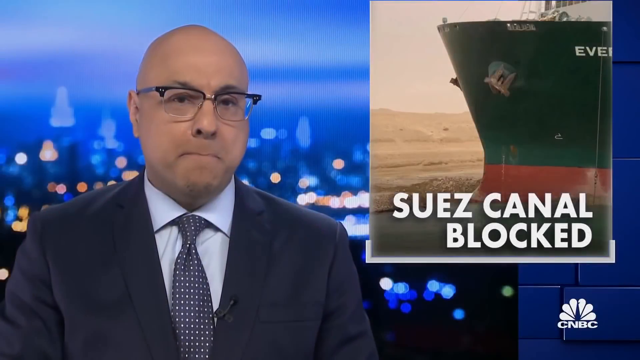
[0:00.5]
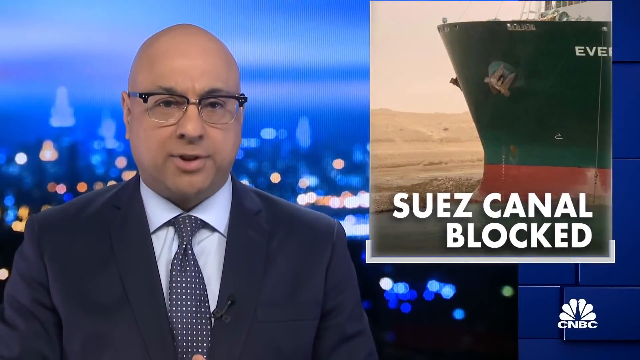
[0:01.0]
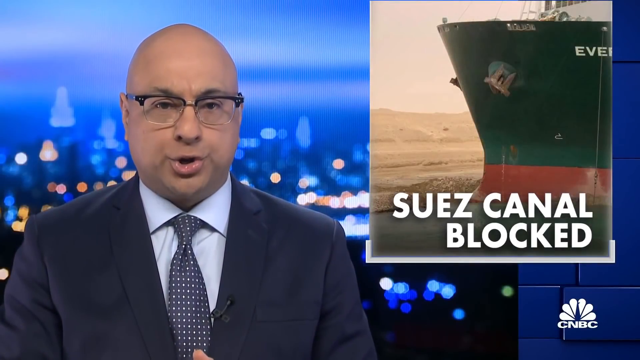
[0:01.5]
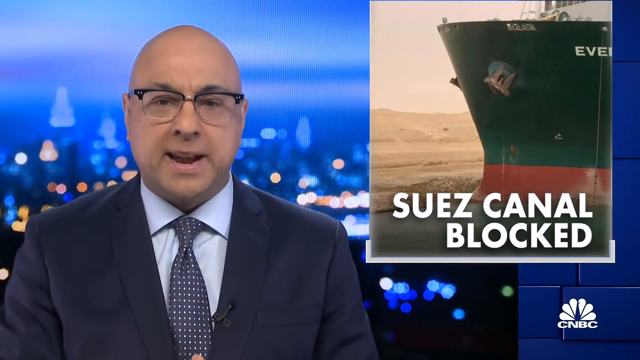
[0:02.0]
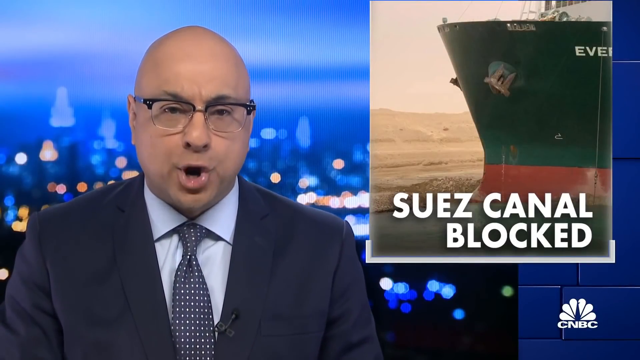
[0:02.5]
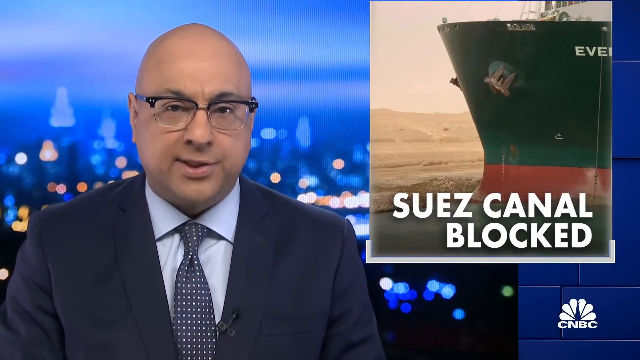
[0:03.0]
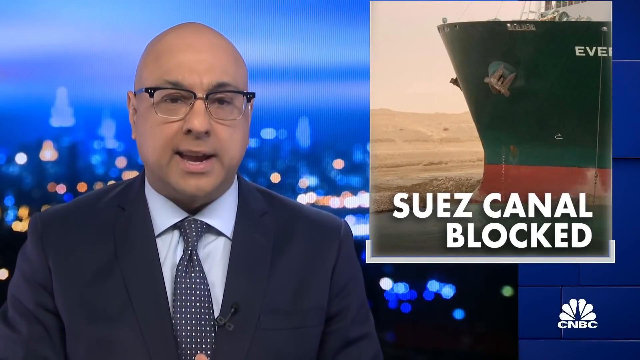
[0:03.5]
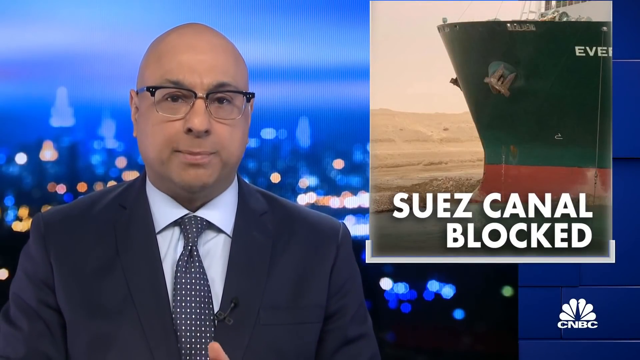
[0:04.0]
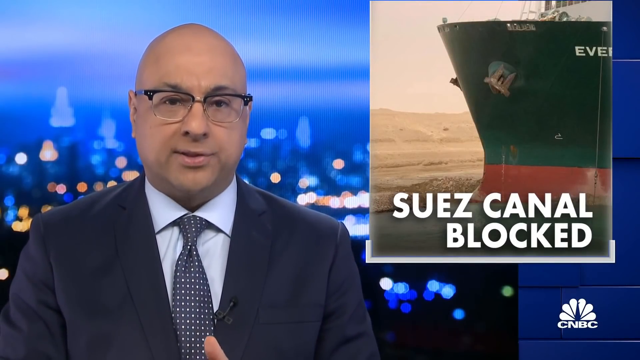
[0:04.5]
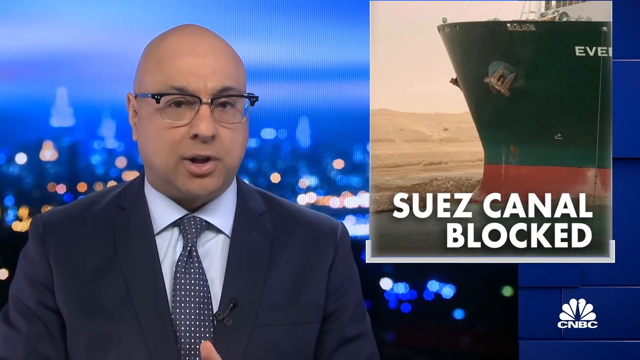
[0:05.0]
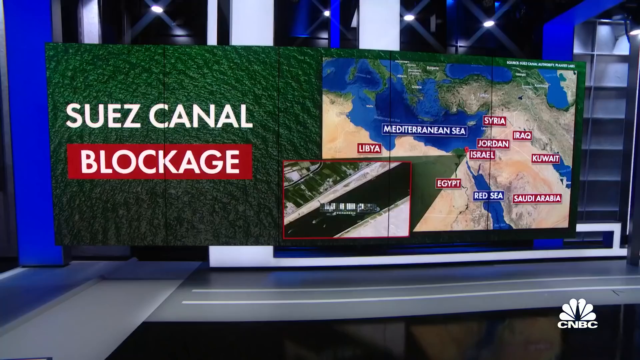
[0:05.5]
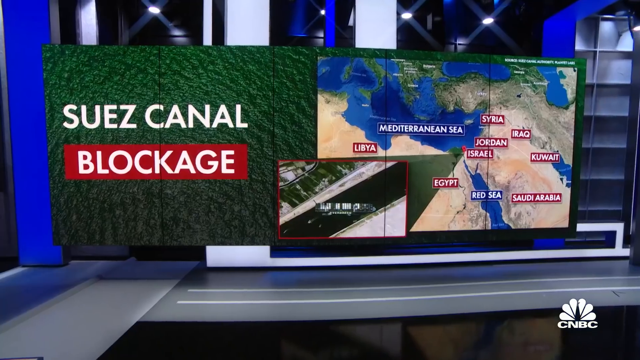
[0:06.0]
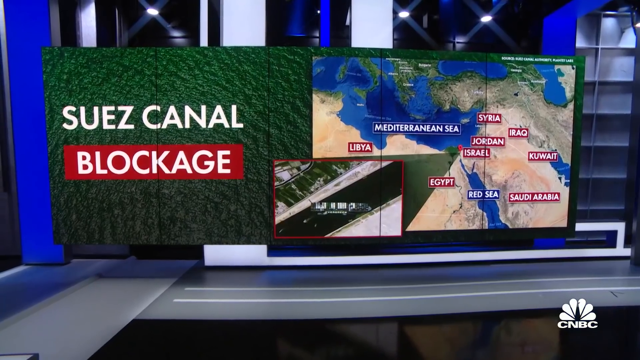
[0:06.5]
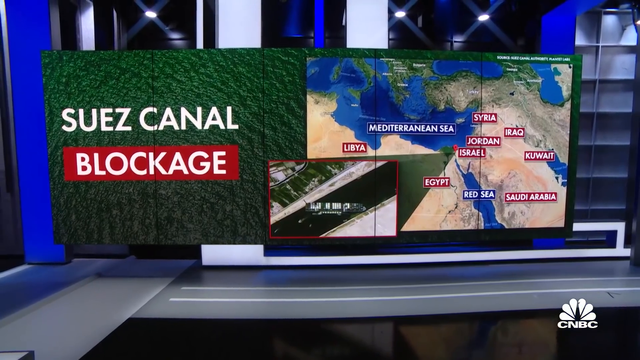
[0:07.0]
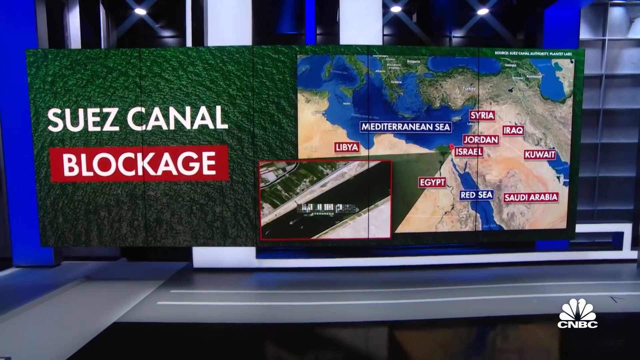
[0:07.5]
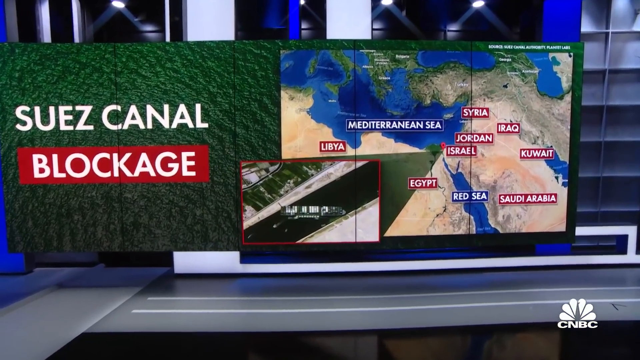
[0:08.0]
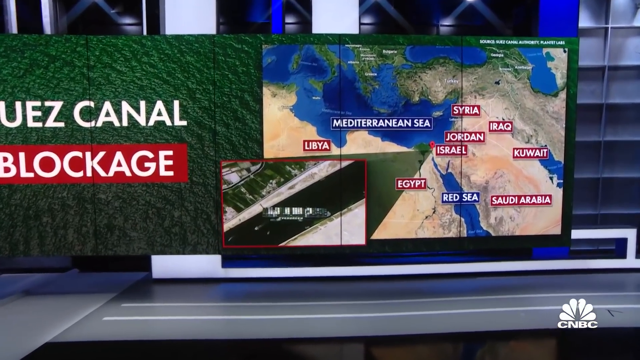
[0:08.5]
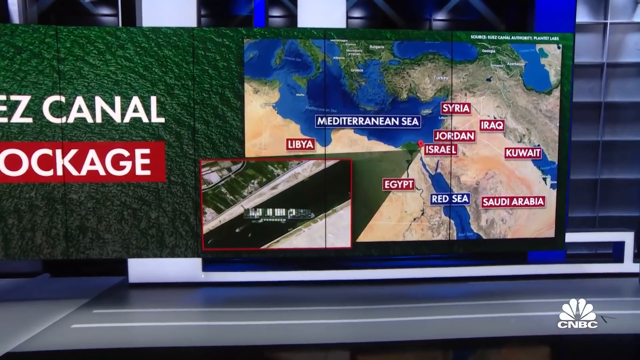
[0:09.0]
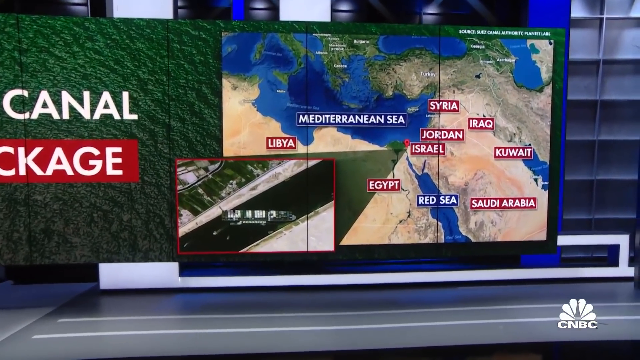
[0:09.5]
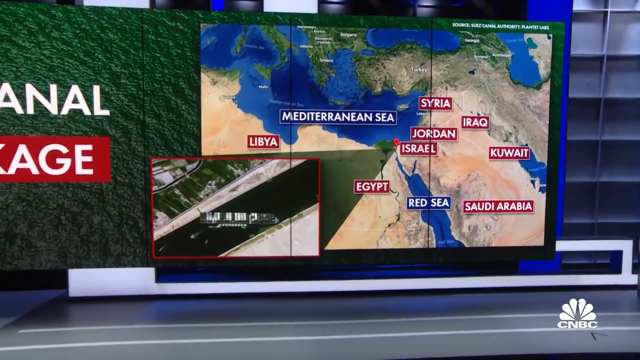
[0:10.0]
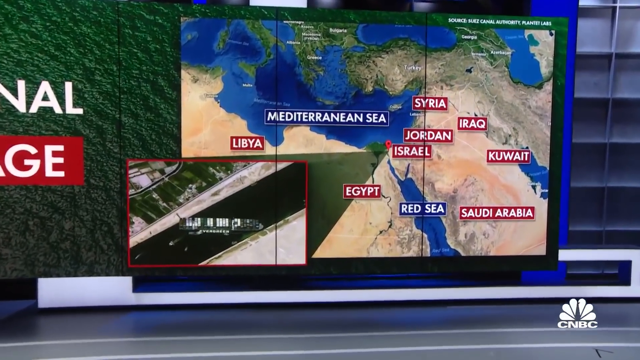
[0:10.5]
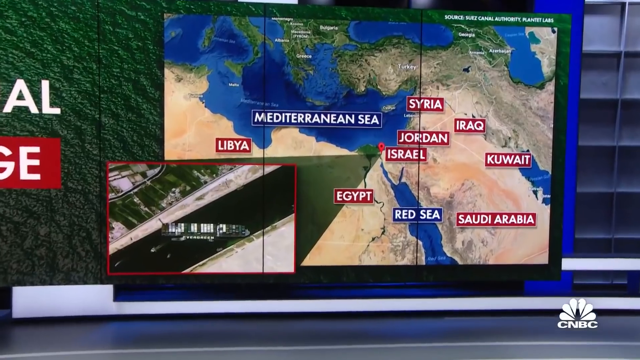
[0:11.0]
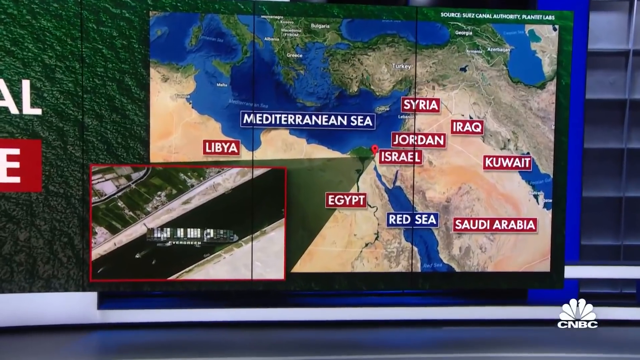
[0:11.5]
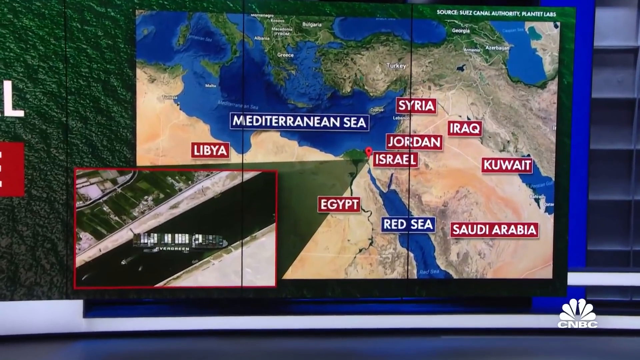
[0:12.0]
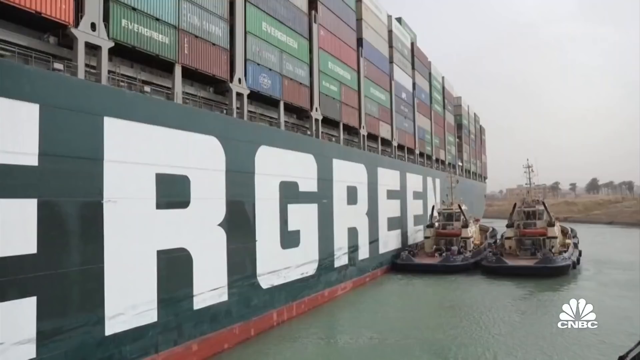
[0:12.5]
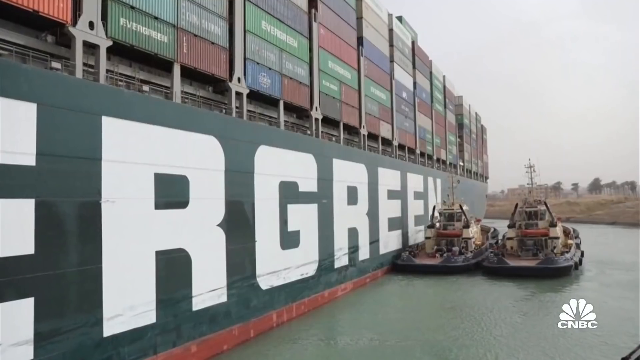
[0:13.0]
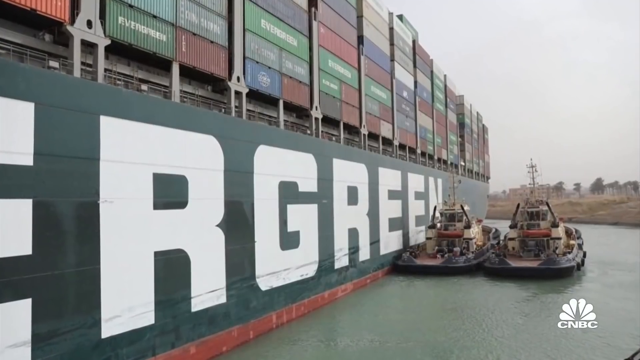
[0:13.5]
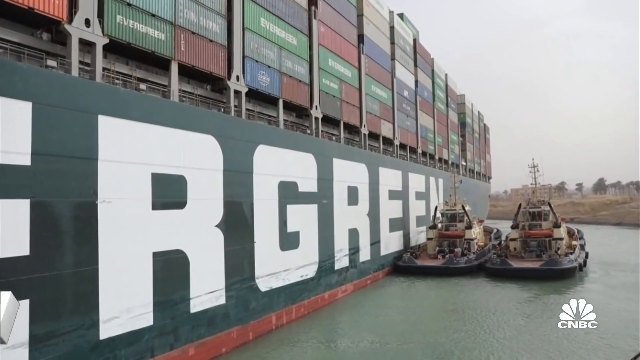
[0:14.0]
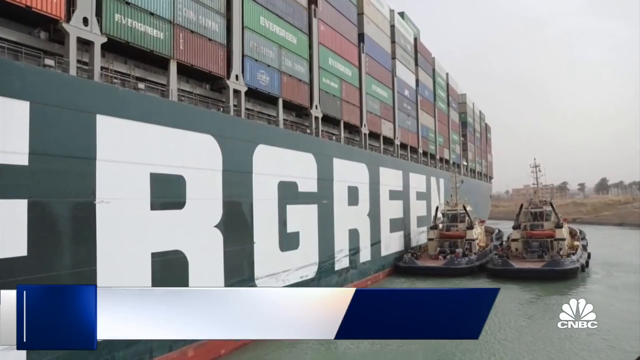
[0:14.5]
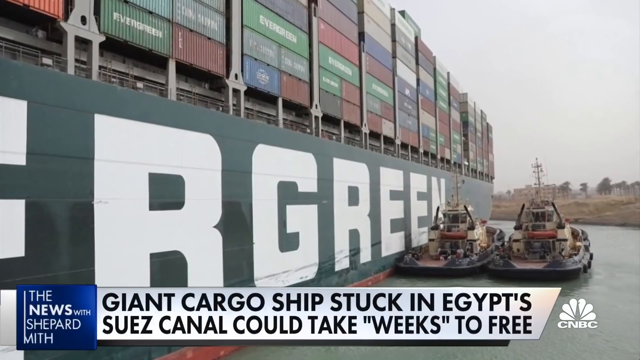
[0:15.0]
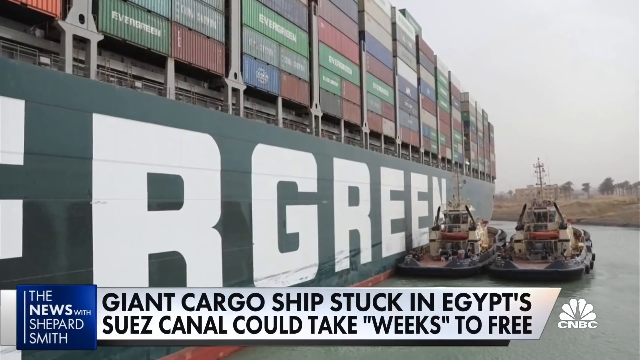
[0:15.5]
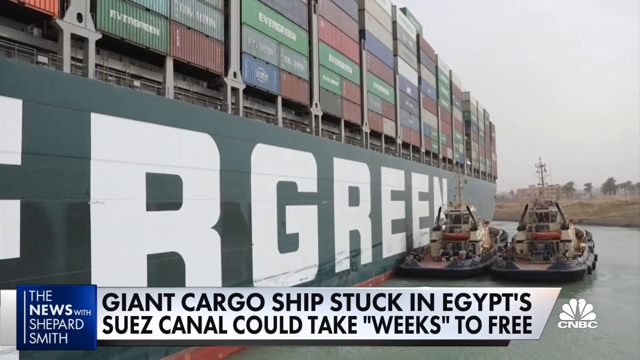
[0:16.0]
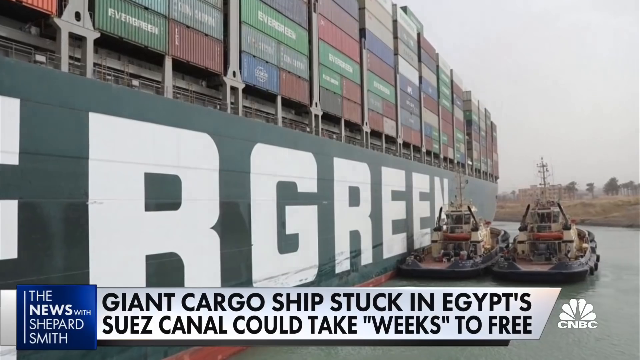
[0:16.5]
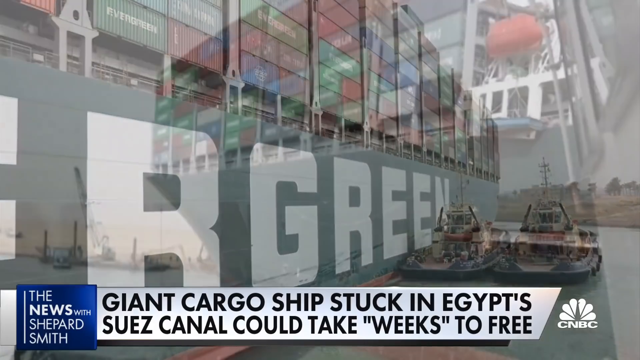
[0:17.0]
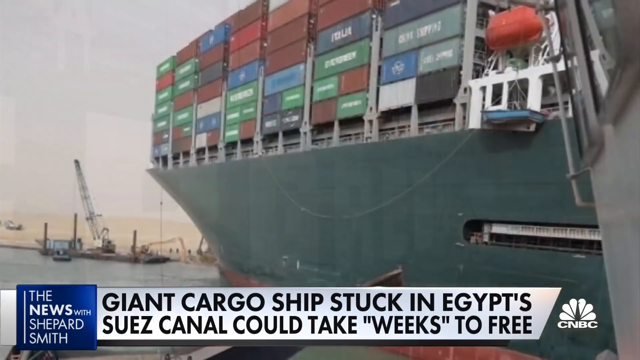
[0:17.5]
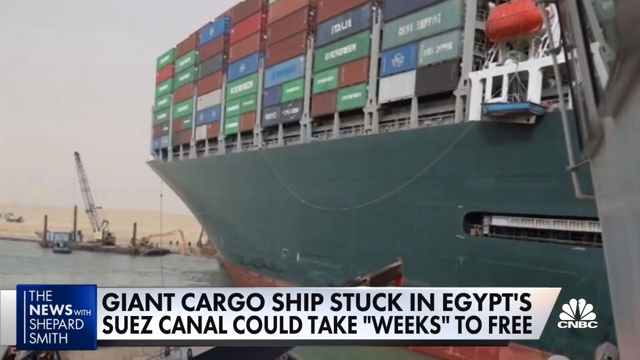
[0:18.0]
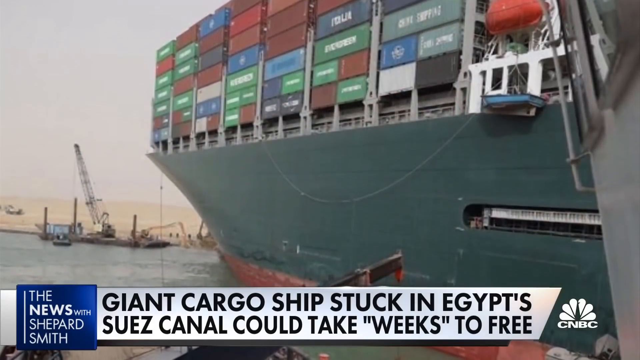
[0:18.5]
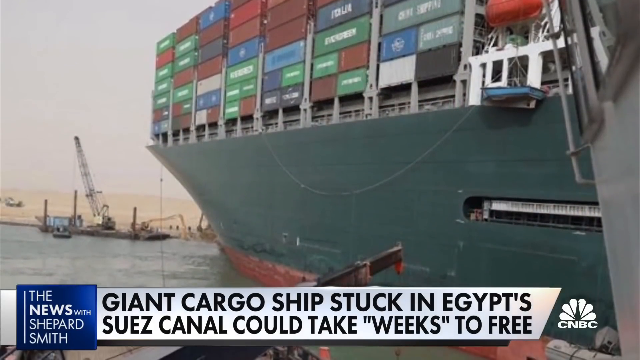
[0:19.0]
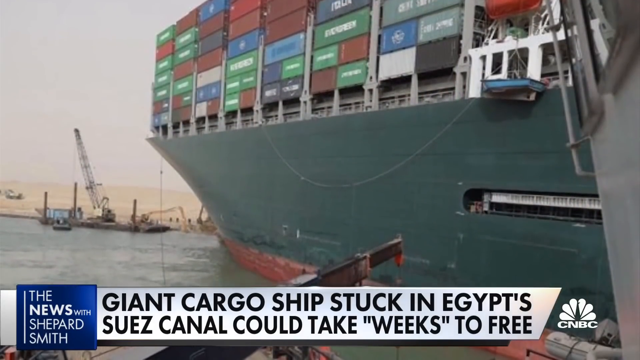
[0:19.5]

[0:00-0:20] A news anchor speaks on the left side of the frame, and about three quarters of the way to the right is the skyline of what appears to be New York City at dusk. The anchor is a bald man with a darker white complexion and thick-rimmed black glasses that are frameless along the bottom. He wears a bluish shirt or jacket, a white shirt and a blue tie with white spots. On the right side is a picture of a black and red ship, with the text "Suez Canal blocked" in bold white letters. A hard cut leads to a map of the Middle East around Egypt, Israel, Jordan, the Red Sea and the Mediterranean Sea, followed by a satellite view of the ship turned sideways. The picture cuts into it and then focuses more on the map. Another hard cut shows efforts to get the Evergreen ship unstuck as it is pushed out. Along the bottom the whole time is an NBC peacock logo with "CNBC" in white.